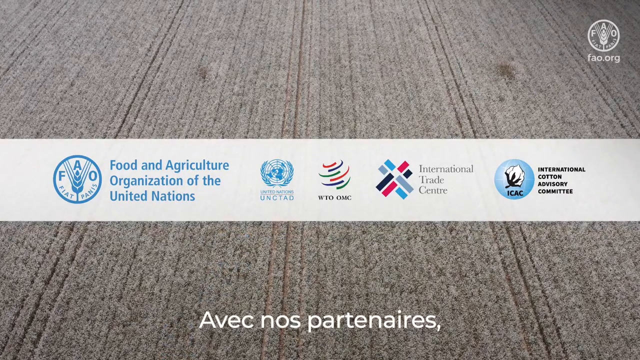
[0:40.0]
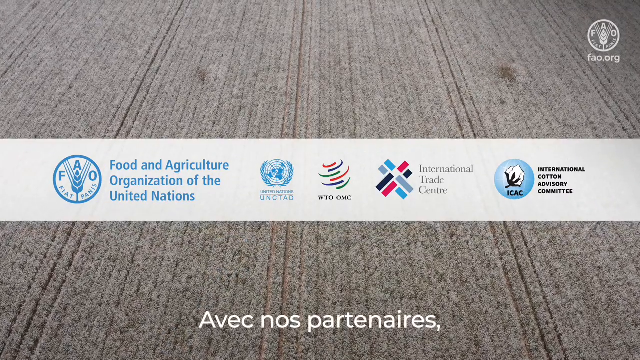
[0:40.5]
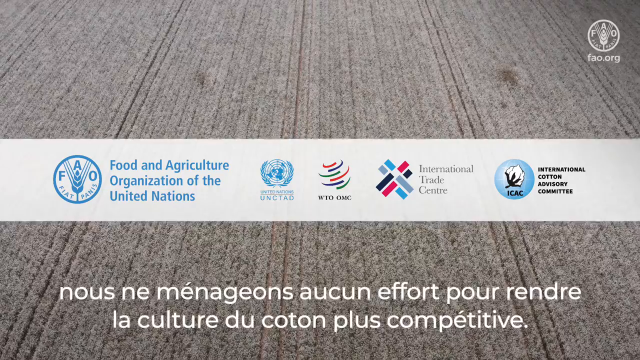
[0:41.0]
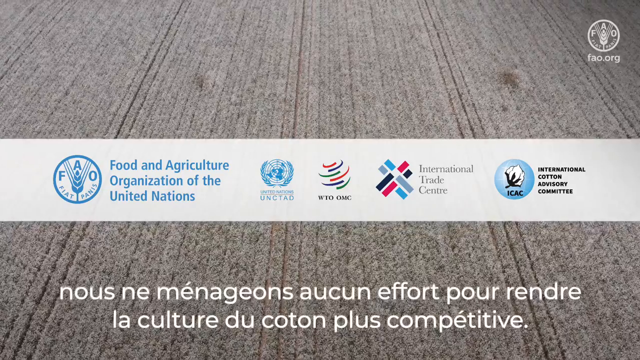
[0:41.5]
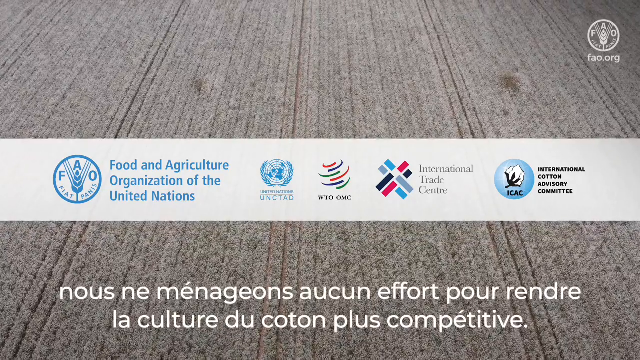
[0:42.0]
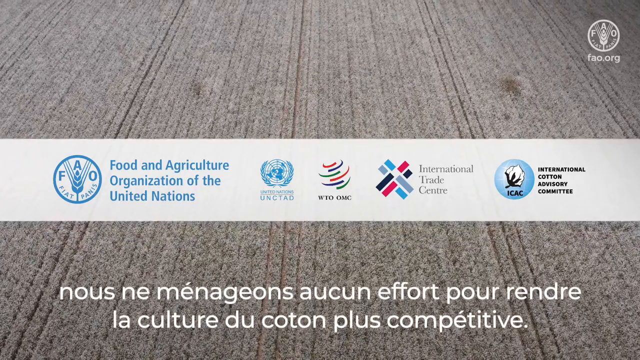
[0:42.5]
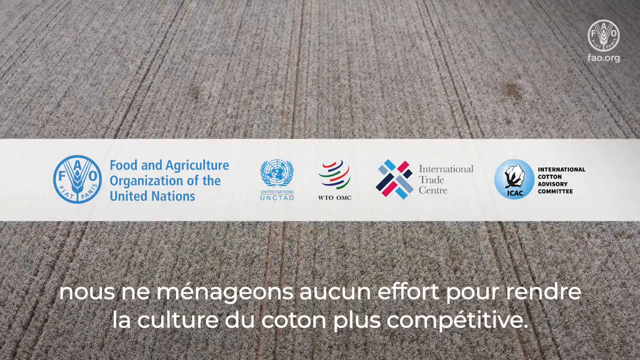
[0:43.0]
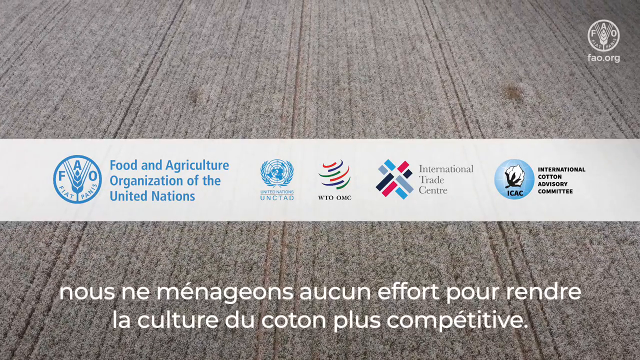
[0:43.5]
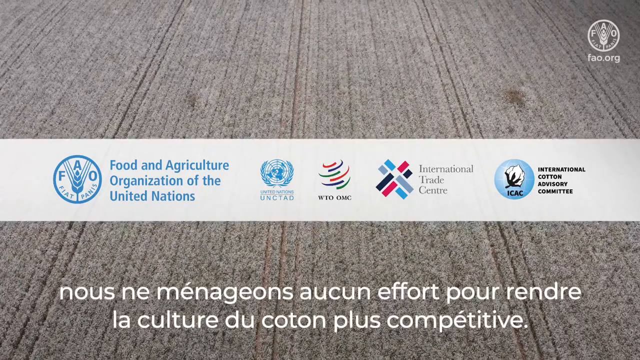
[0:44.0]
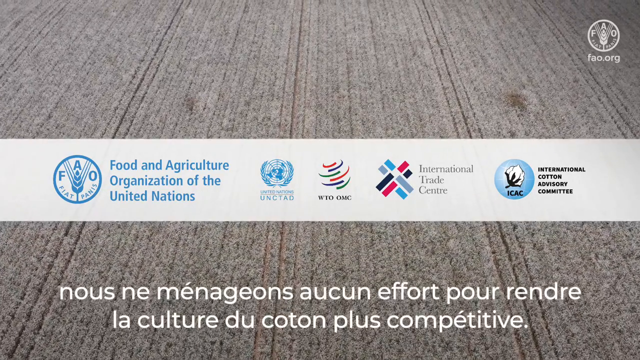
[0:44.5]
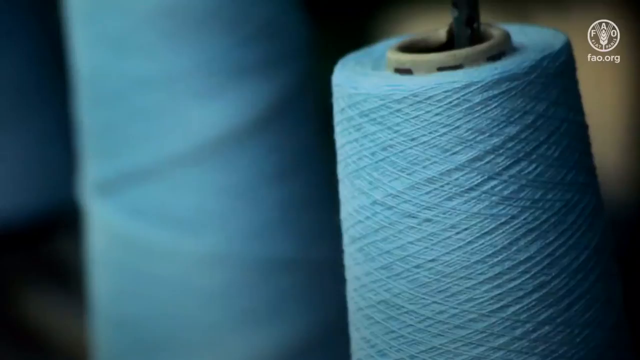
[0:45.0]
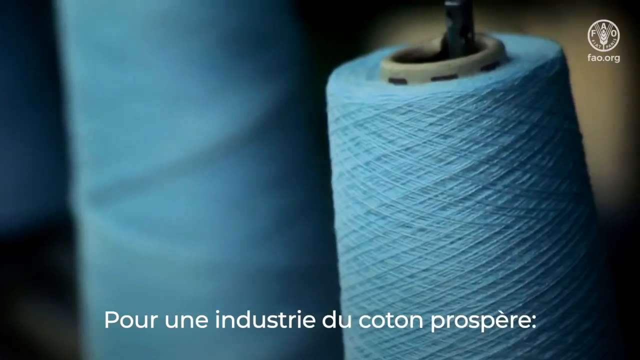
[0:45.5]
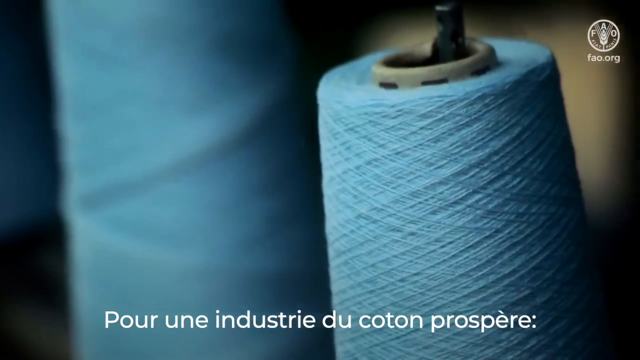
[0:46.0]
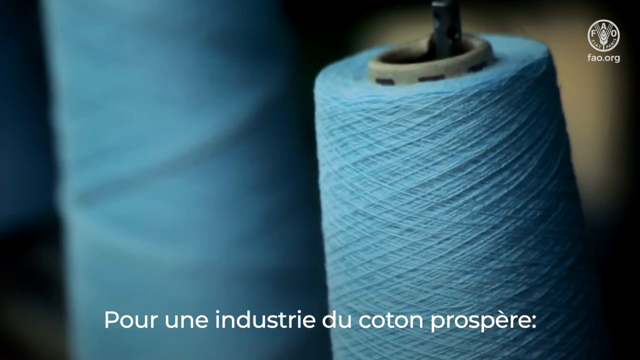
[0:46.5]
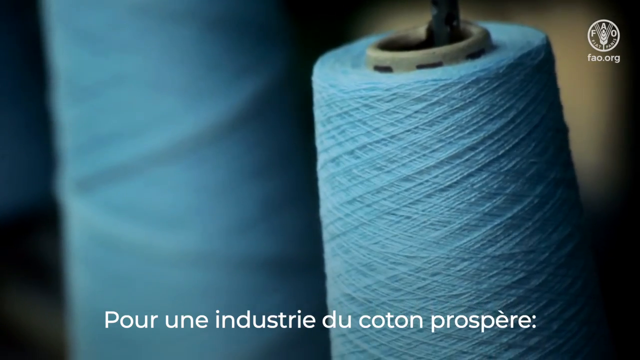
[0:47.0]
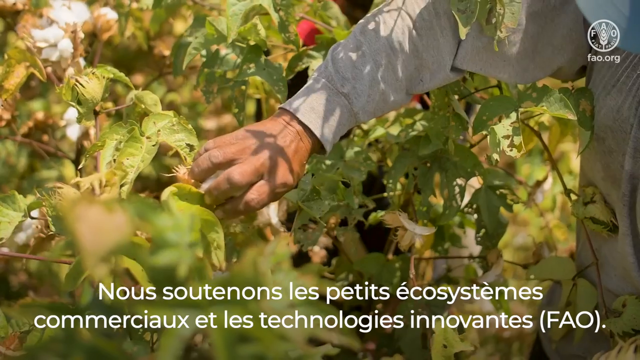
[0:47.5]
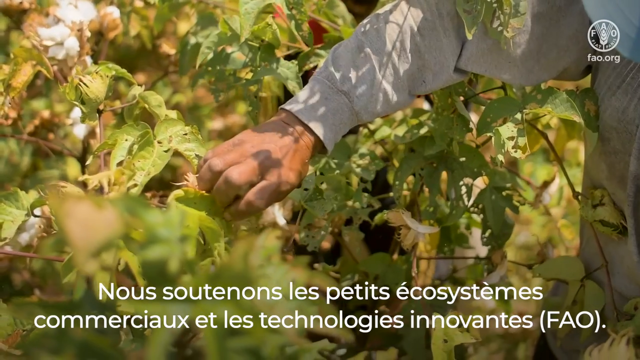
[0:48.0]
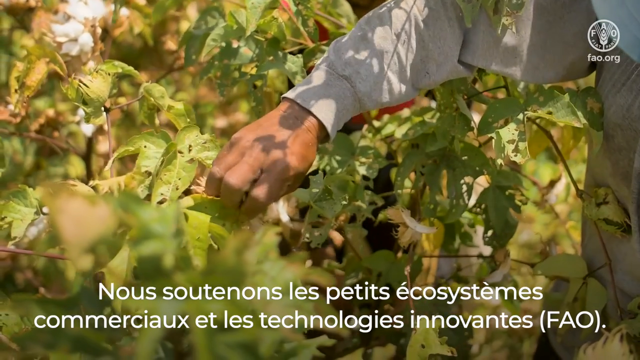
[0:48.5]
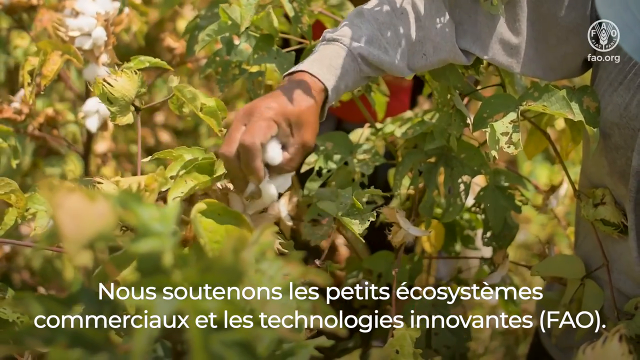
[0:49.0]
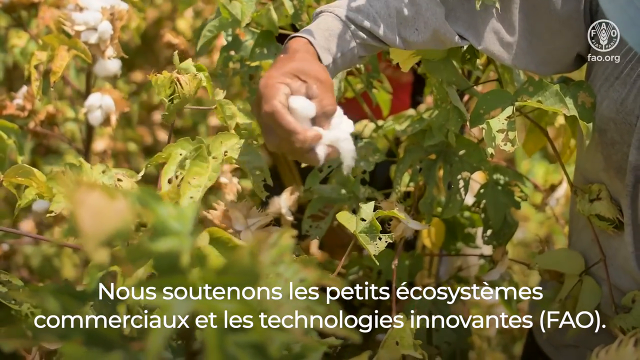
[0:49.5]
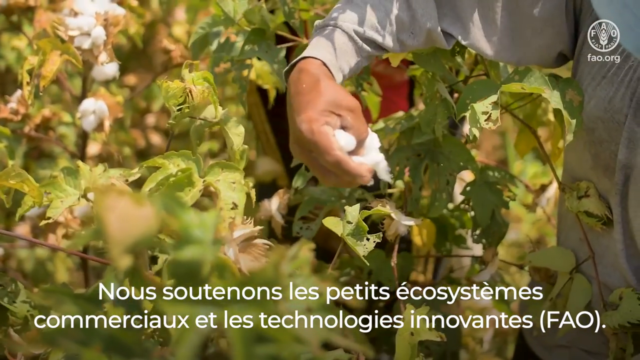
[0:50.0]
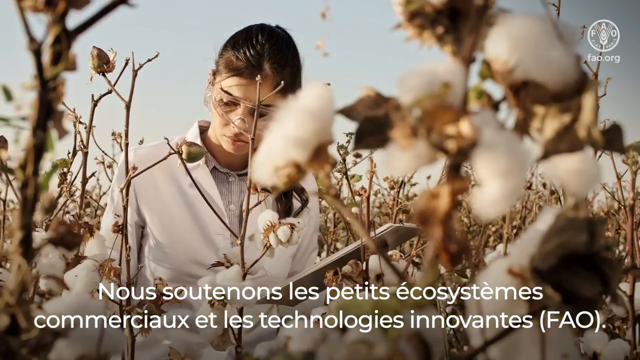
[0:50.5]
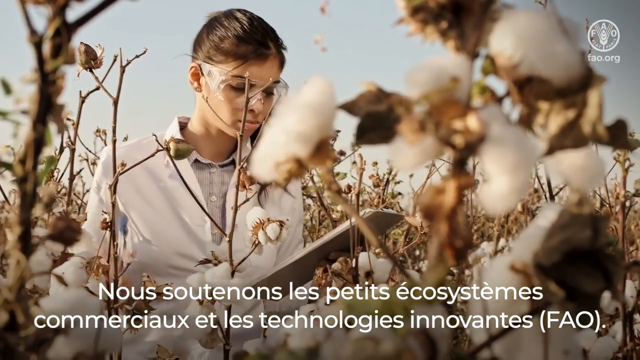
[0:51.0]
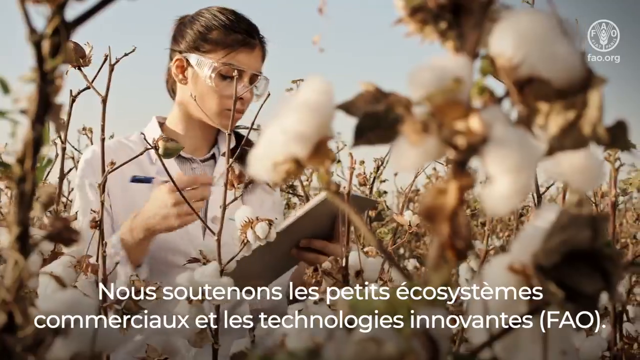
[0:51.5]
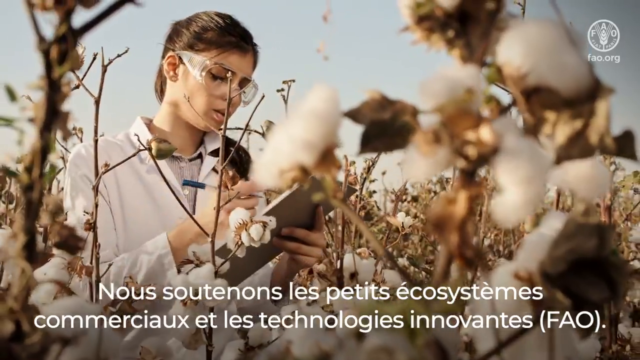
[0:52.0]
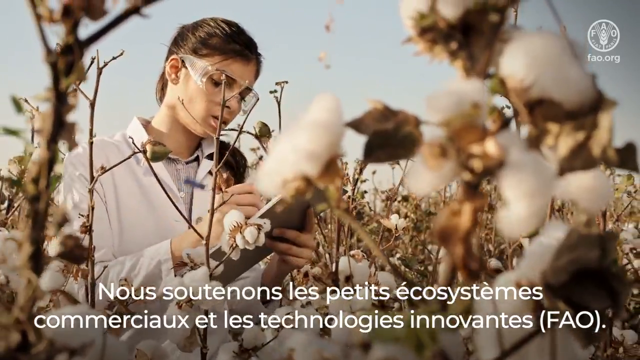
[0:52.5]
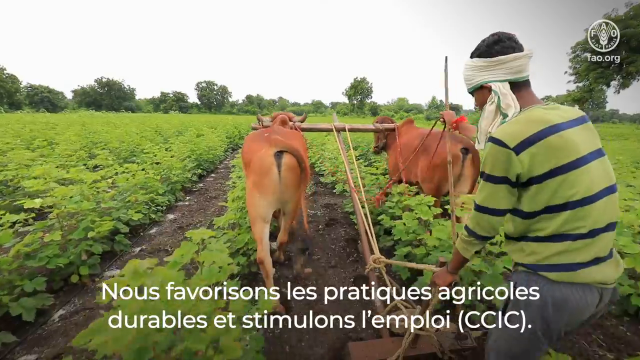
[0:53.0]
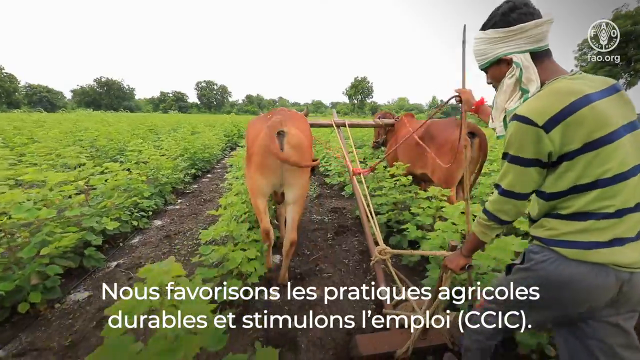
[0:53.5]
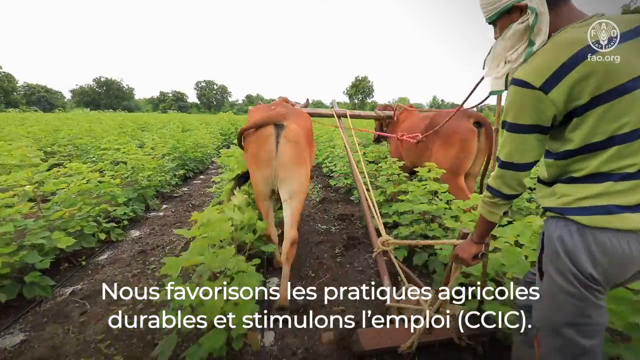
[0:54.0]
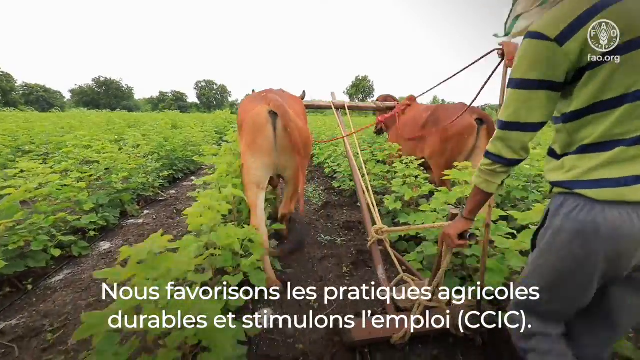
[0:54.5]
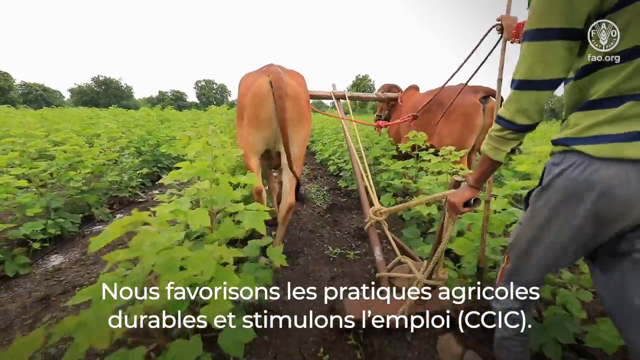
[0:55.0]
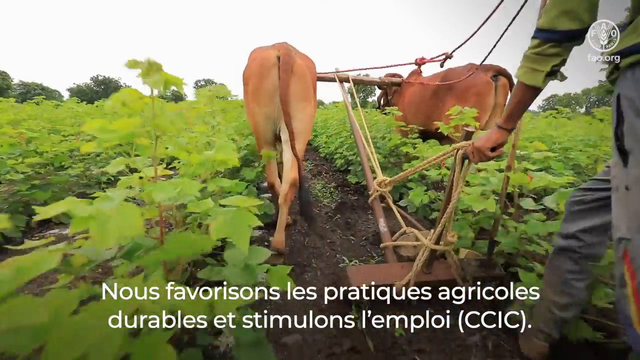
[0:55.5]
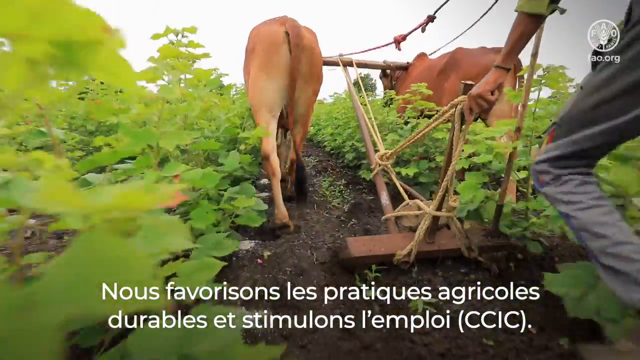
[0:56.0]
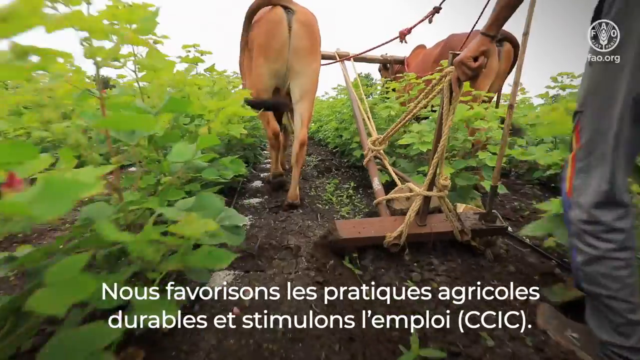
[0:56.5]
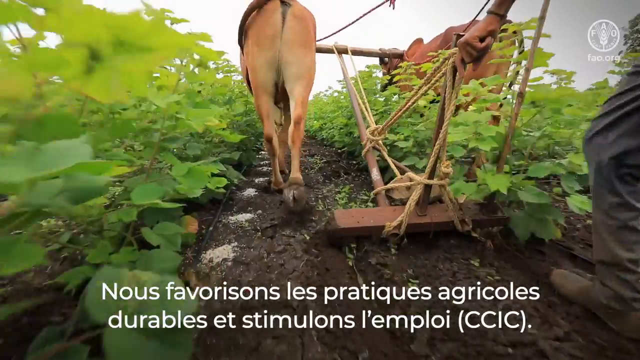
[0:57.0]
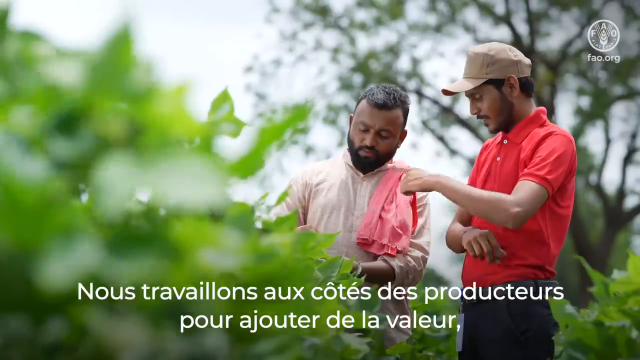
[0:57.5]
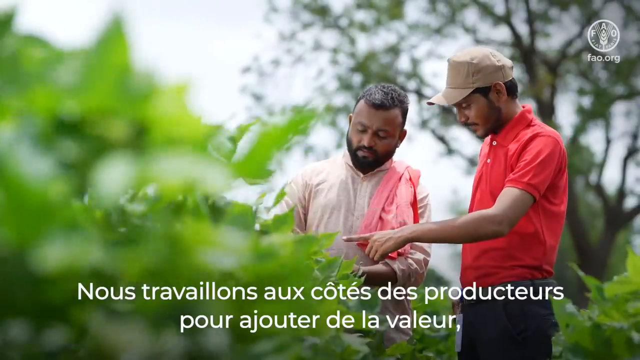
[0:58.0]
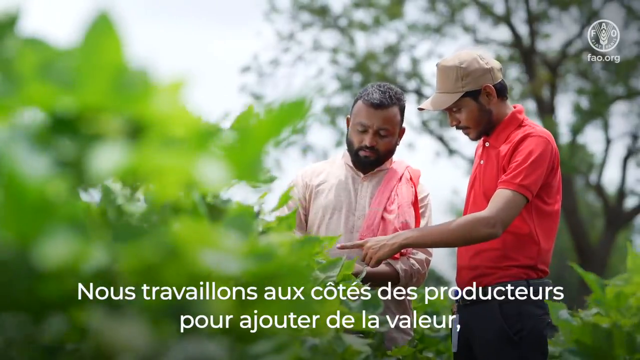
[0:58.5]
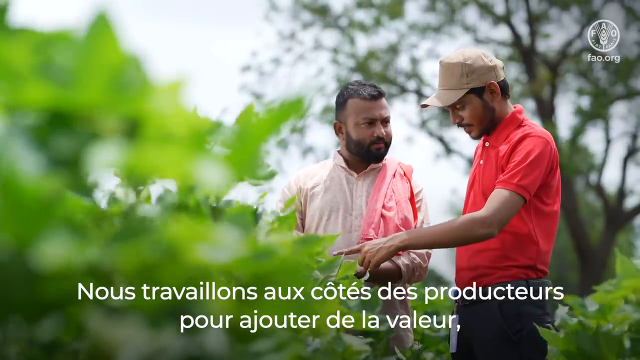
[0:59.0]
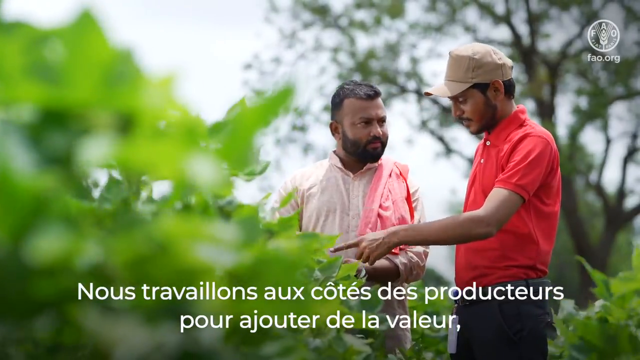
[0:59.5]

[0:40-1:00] A horizontal banner spans the screen. On the left side, blue text reads "Food and Agriculture Organization of the United Nations" alongside a logo in a similar blue color: a round circle with an icon of a piece of wheat in the middle. Multiple other logos are to the right of this text, including those of organizations such as the International Trade Center and the International Cotton Advisory Committee. The video then cuts to two spools of thin blue string and pans back to the cotton field, with scenes of people picking the cotton and scientists in the field researching it. A person drives two animals, likely cows, through a field with many green leaves on the ground. Lastly, two men, both in red and pink attire, talk to each other in the middle of the cotton fields.